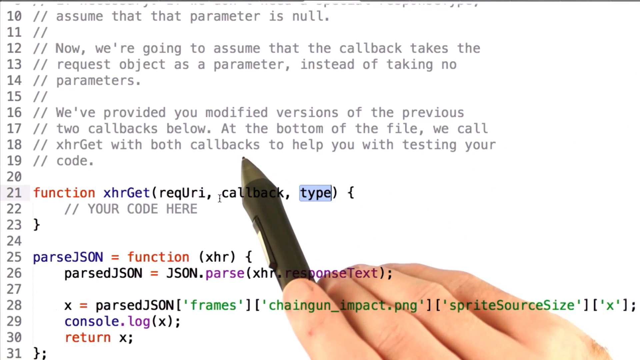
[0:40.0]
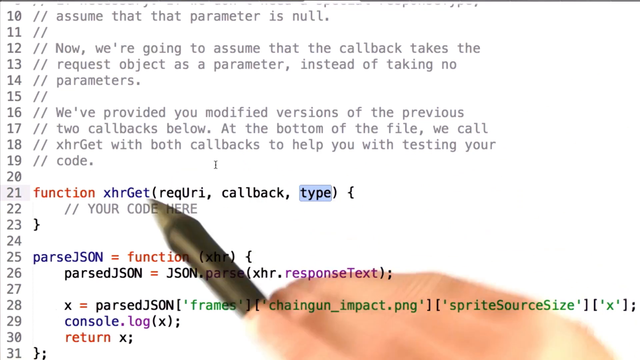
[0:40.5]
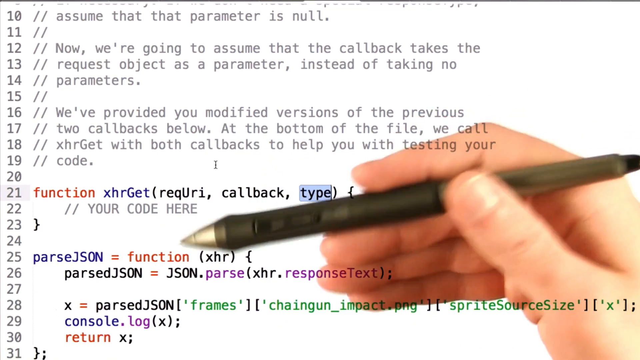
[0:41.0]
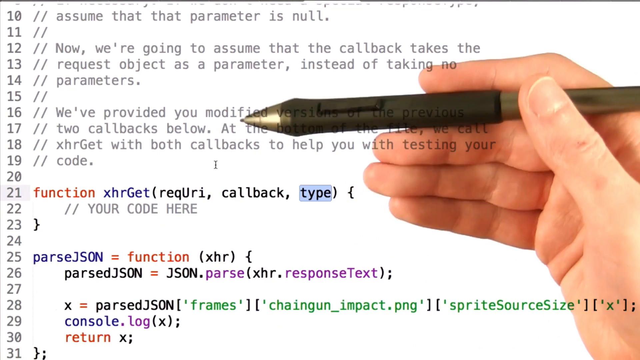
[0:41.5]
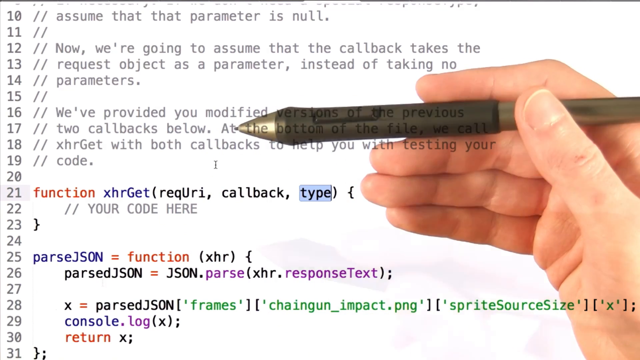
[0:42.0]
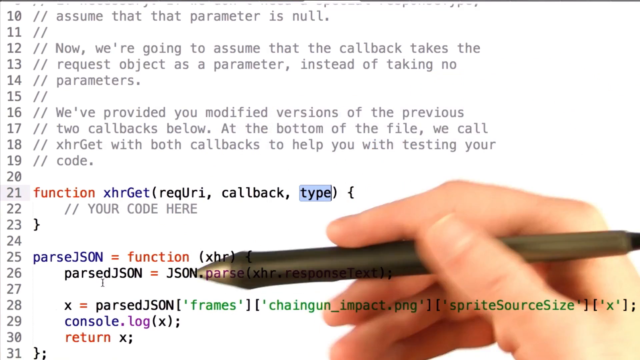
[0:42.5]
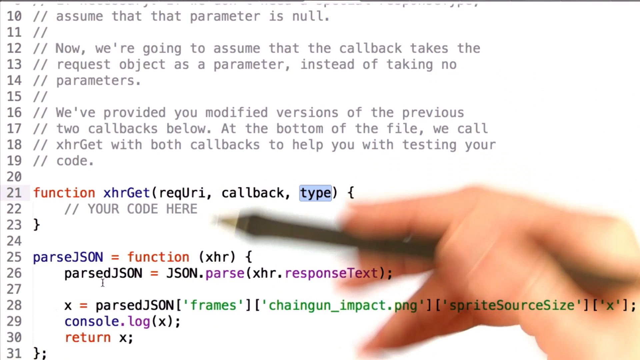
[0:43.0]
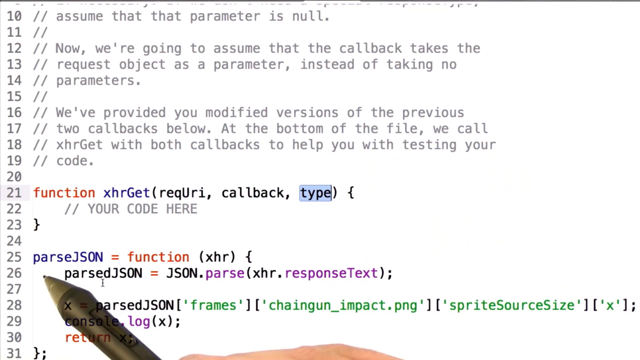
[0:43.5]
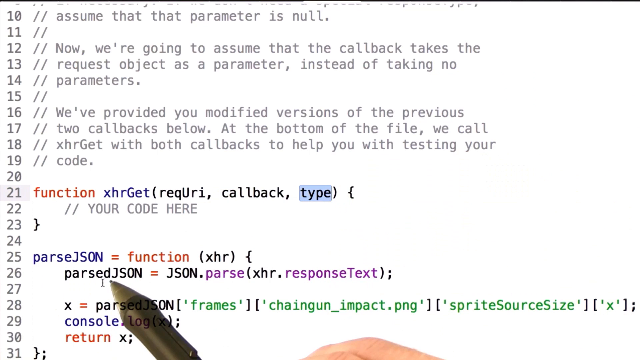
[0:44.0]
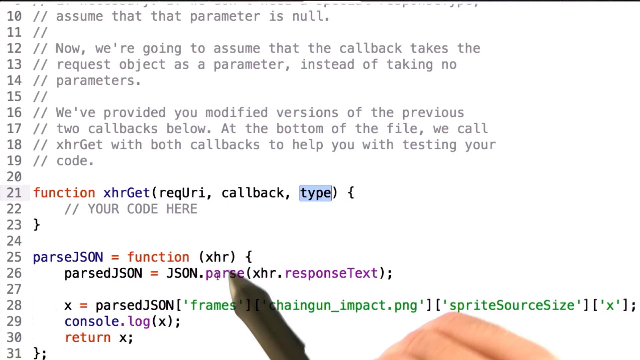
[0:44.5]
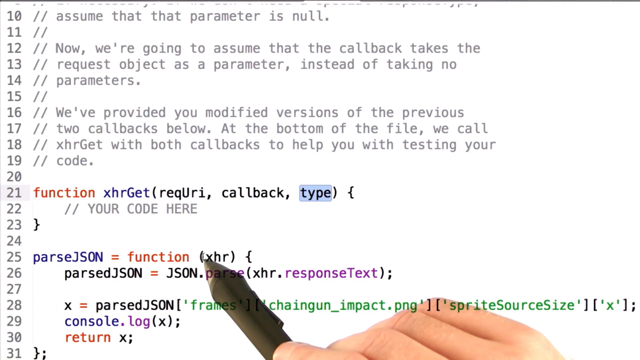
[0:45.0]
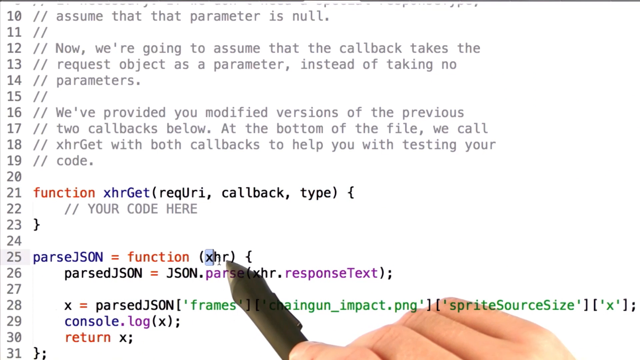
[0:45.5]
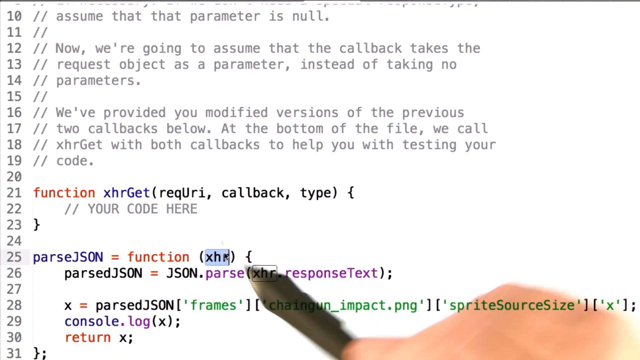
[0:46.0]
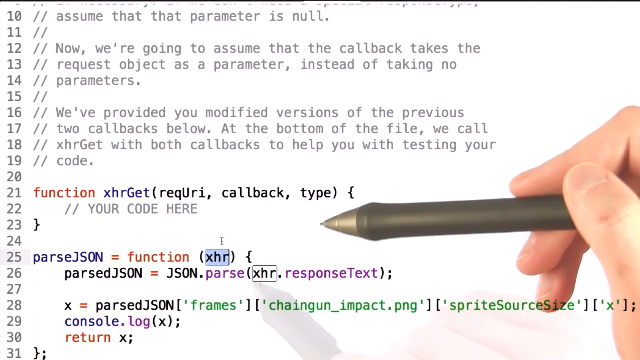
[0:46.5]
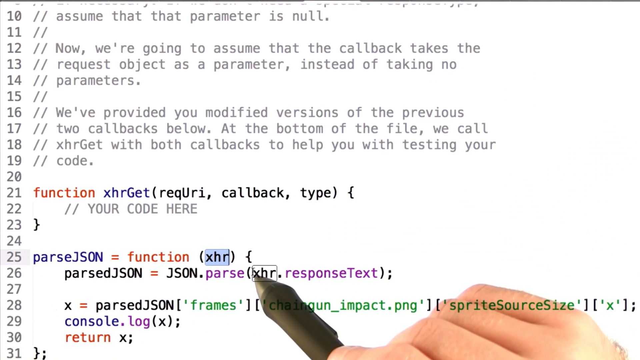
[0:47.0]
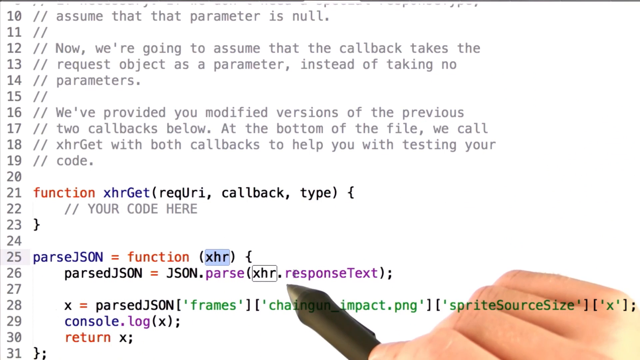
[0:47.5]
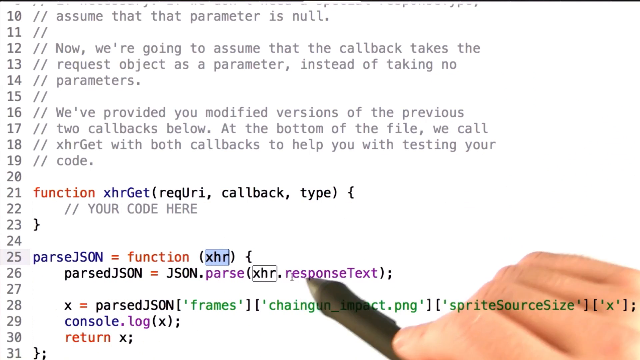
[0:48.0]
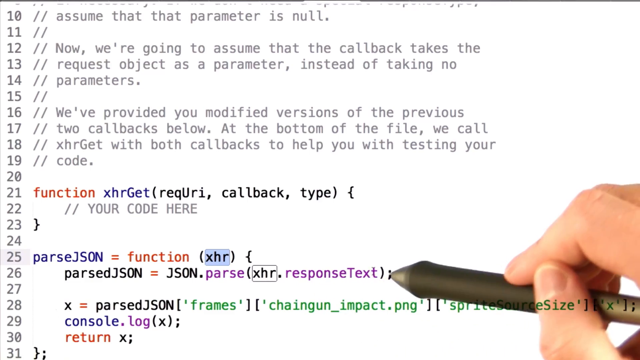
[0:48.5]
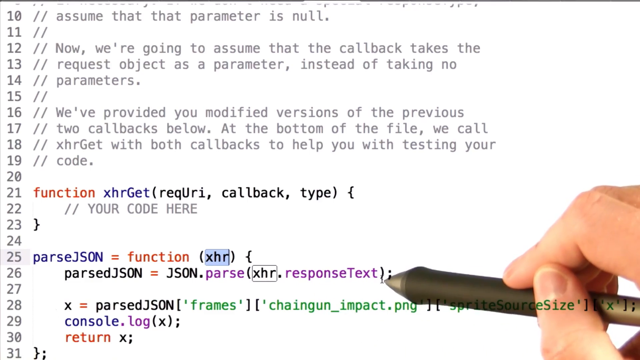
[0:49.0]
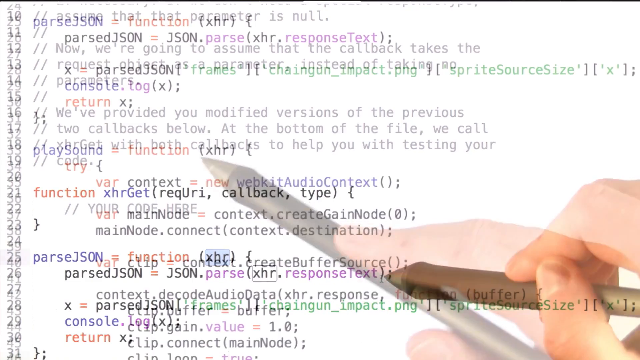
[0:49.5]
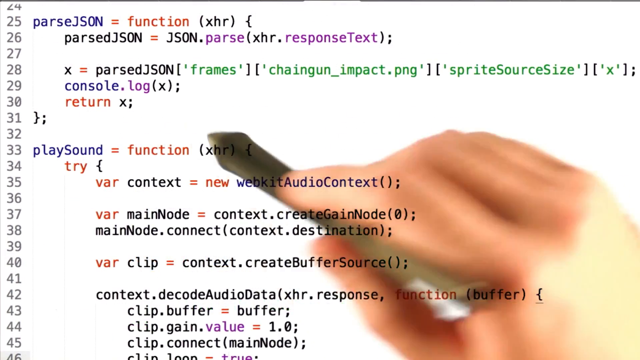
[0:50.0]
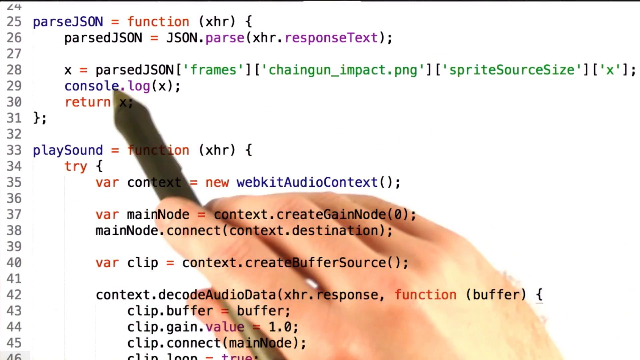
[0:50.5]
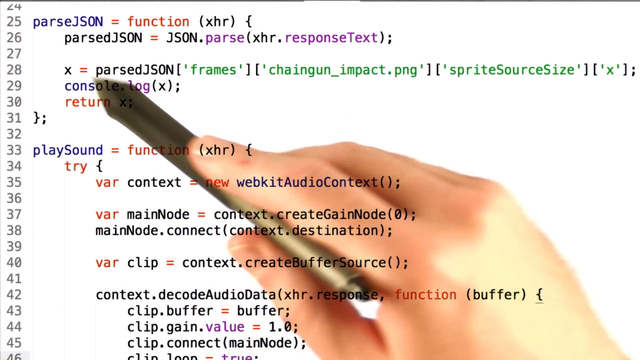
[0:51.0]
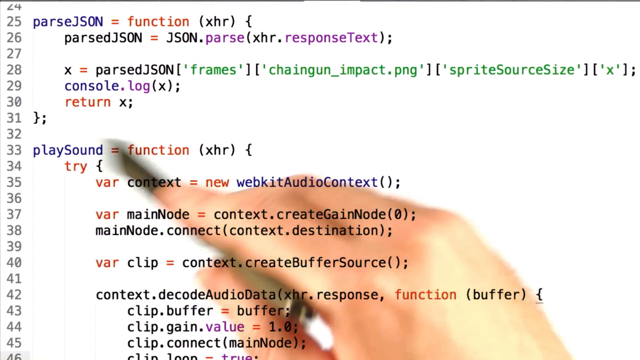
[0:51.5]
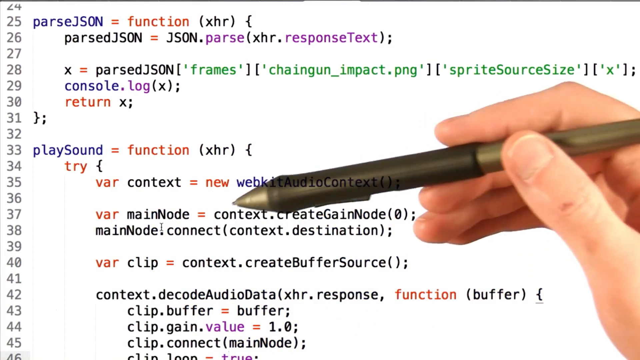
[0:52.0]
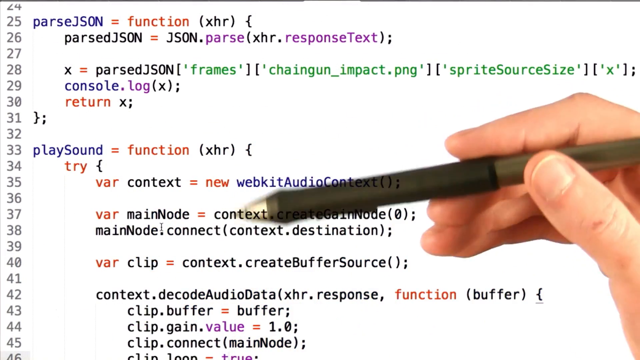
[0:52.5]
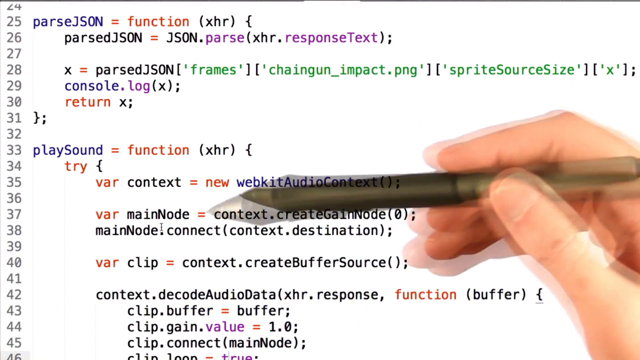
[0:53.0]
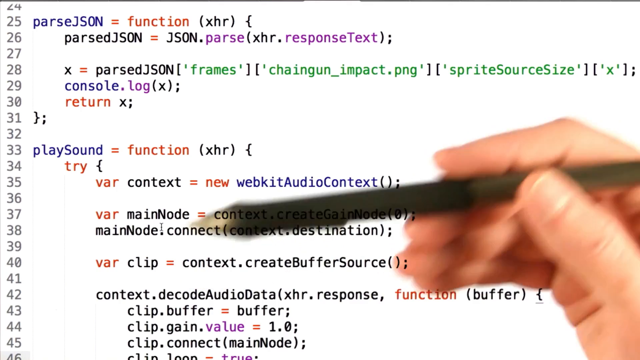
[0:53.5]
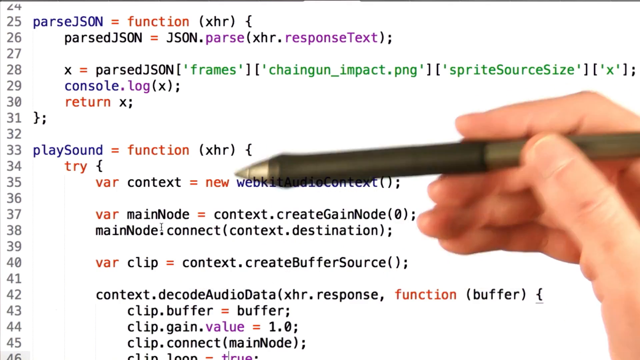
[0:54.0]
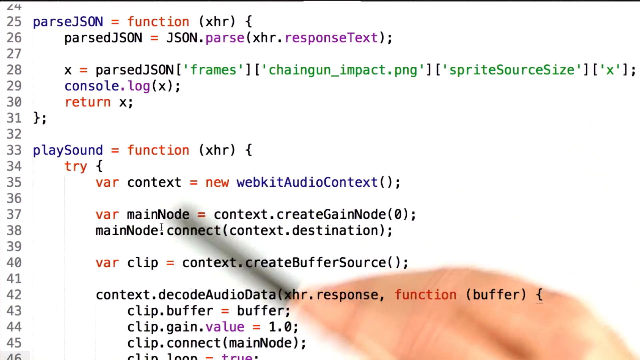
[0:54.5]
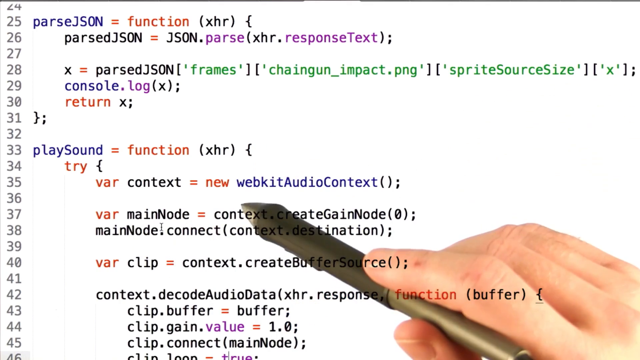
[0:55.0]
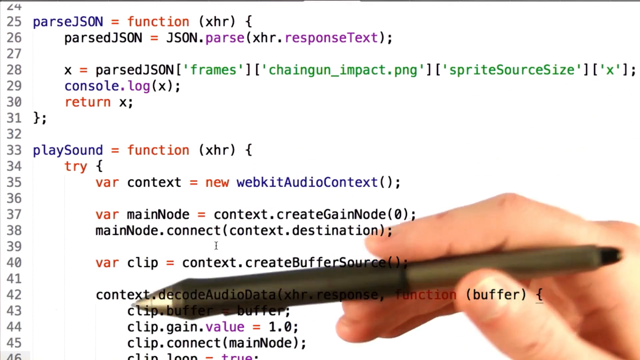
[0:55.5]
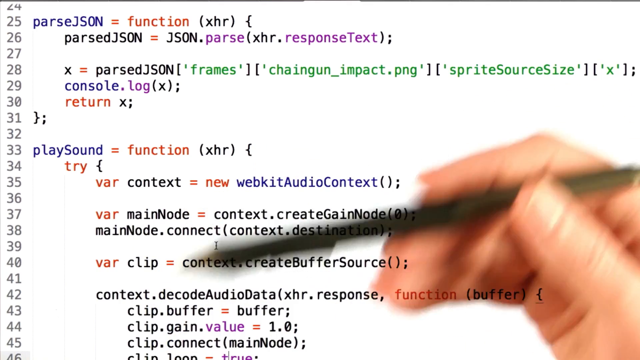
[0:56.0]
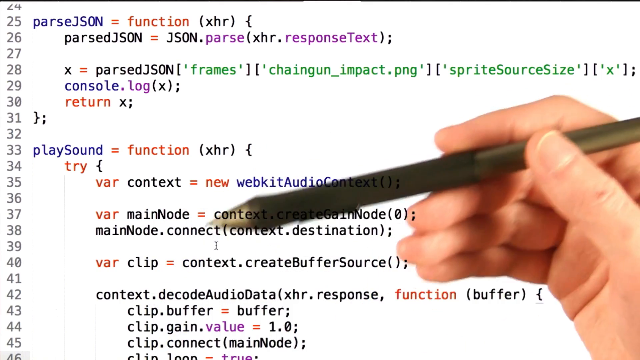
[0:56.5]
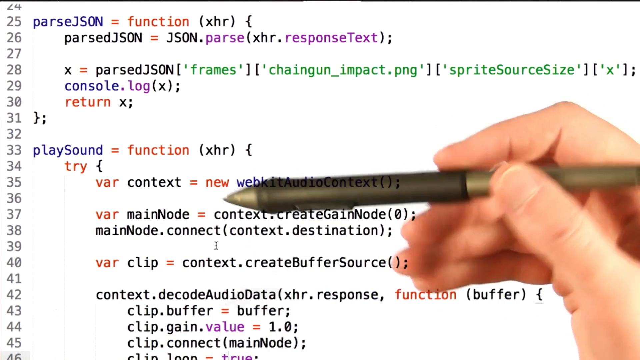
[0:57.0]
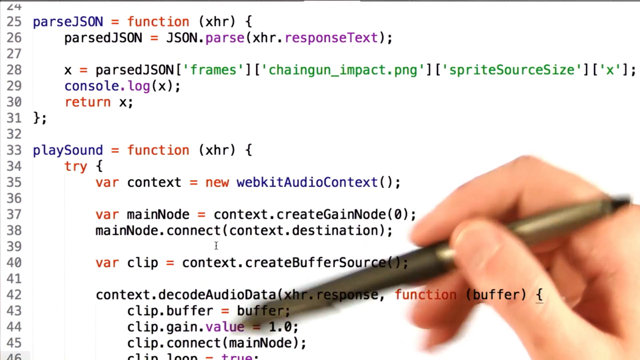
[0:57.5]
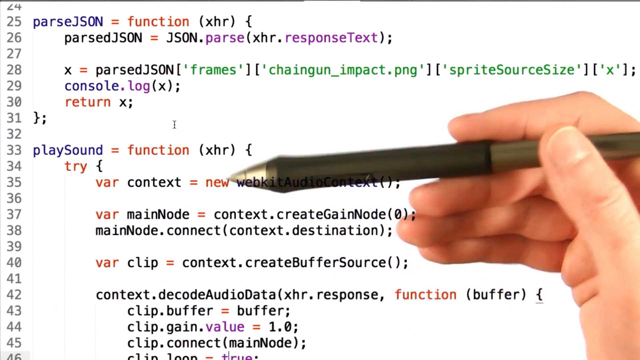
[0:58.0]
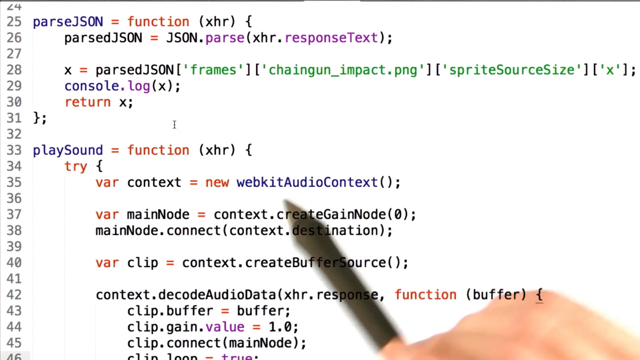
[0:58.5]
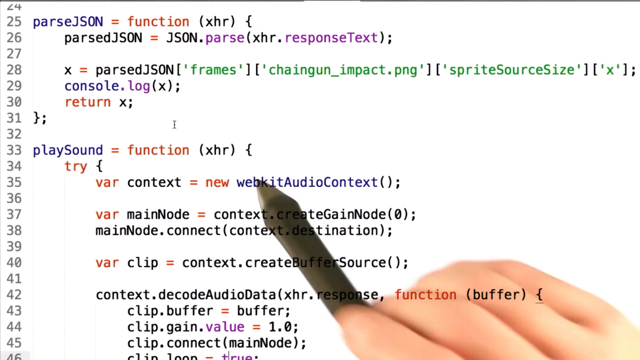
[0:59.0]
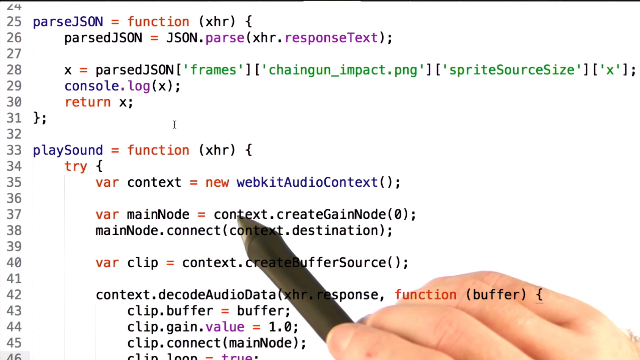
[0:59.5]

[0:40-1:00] A blank white background shows the numbers 10 through 31 running vertically in grey on the left-hand side. Beside numbers 10 to 19 are two slashes, and some of those lines have grey text. After that, each line either has code in black, orange, green, or purple text or is blank. A person's hand with a pen is visible behind the code. The word type on line 21 is highlighted, and the hand moves in a circular motion, as if trying to explain something. The person points to various sections of the code, highlights the letters XHR on line 25, and points to various functions before the page moves to show new code running from line 24 to 46. The pen continues to move around, indicating various parts of the code and pointing to specific words.